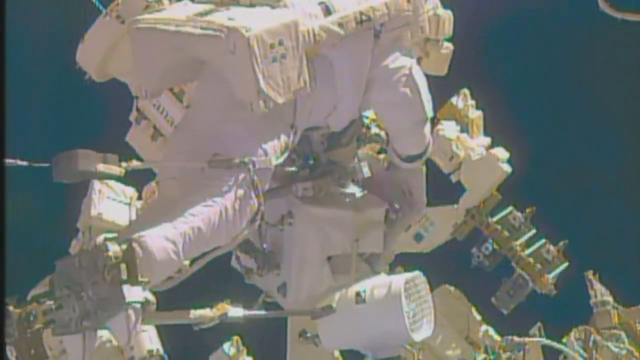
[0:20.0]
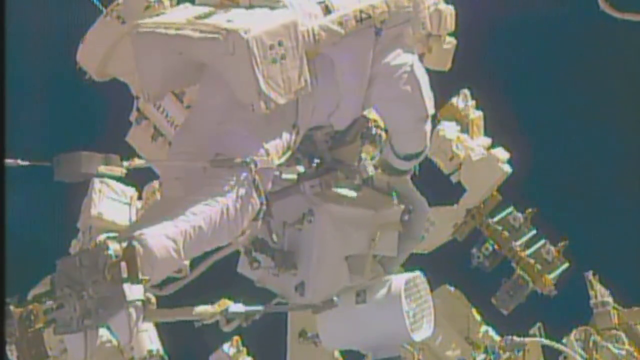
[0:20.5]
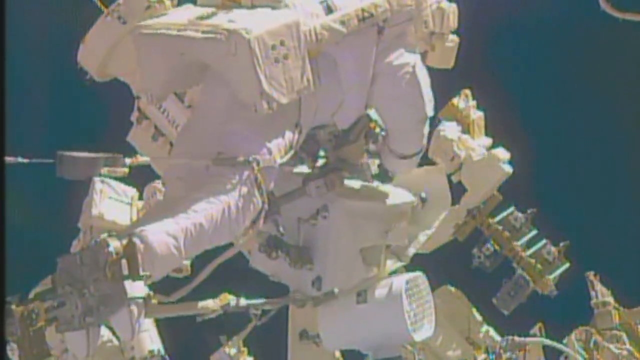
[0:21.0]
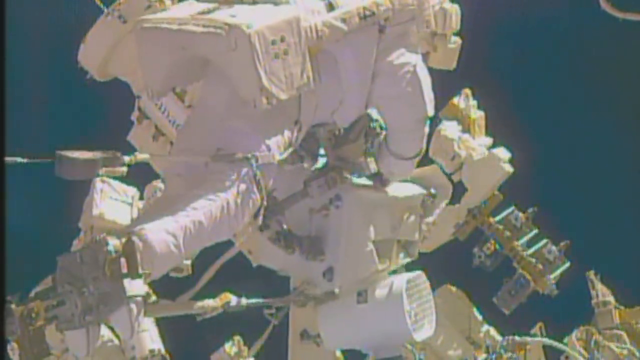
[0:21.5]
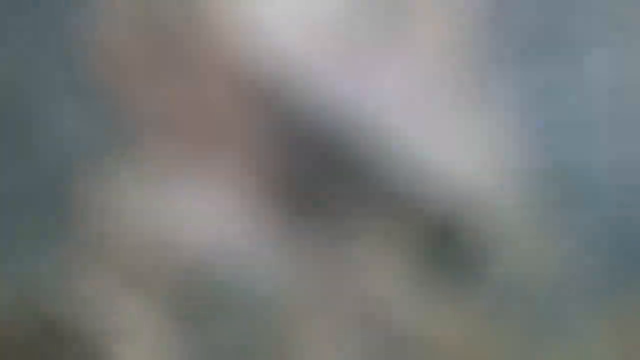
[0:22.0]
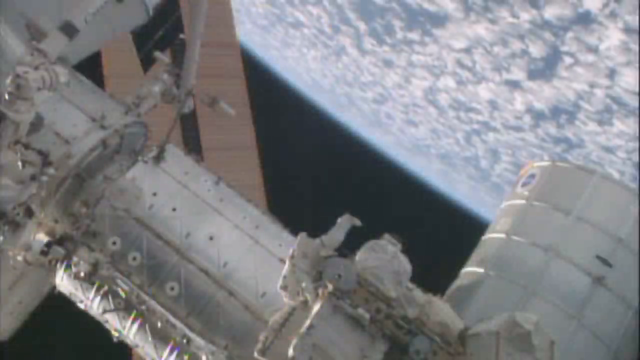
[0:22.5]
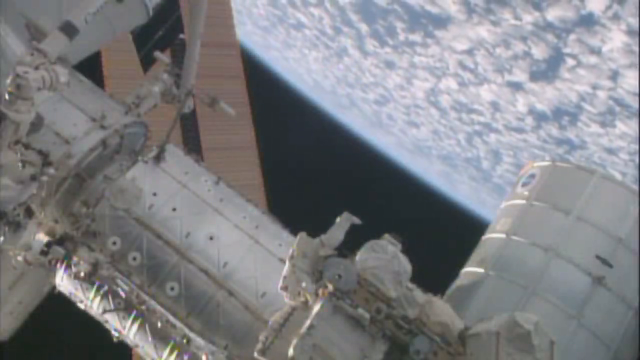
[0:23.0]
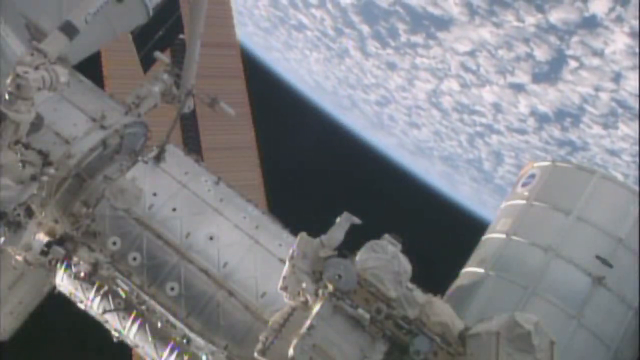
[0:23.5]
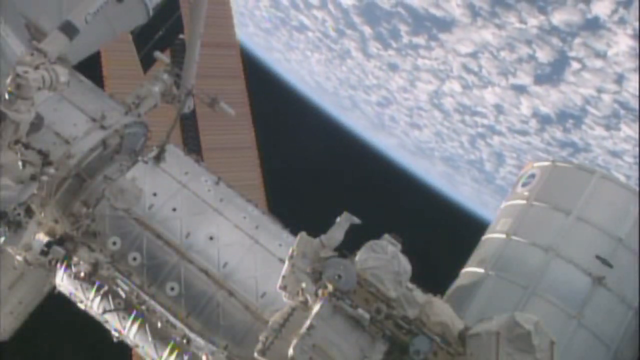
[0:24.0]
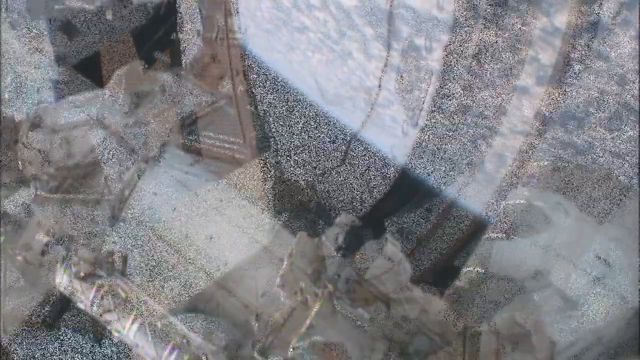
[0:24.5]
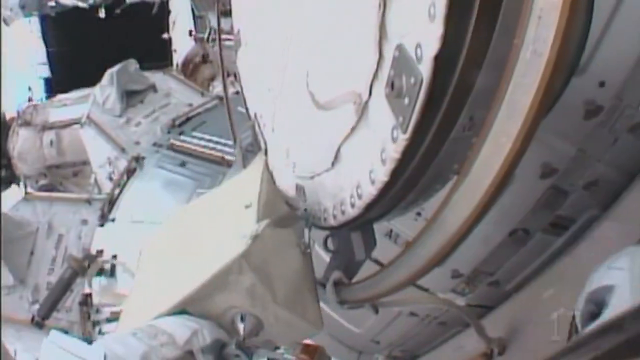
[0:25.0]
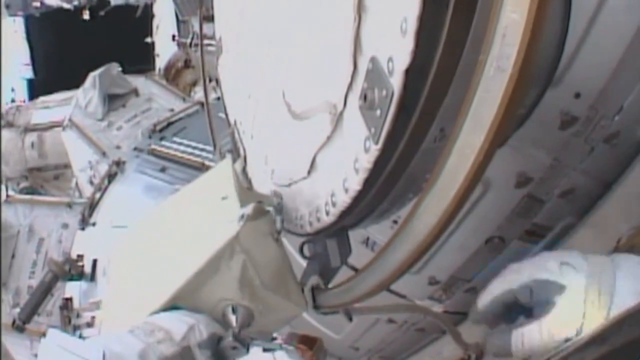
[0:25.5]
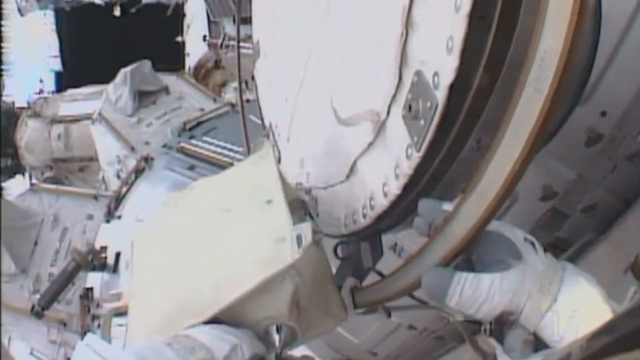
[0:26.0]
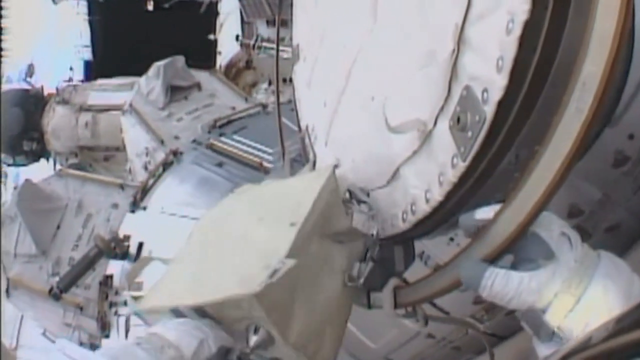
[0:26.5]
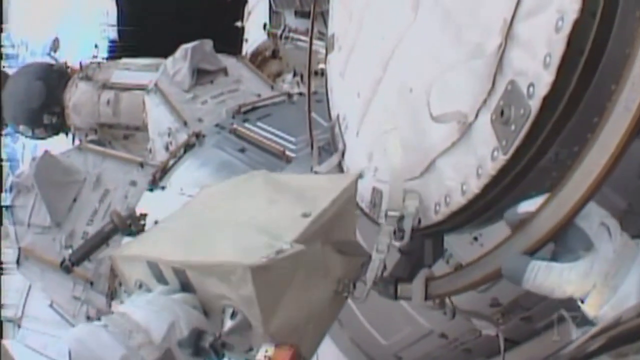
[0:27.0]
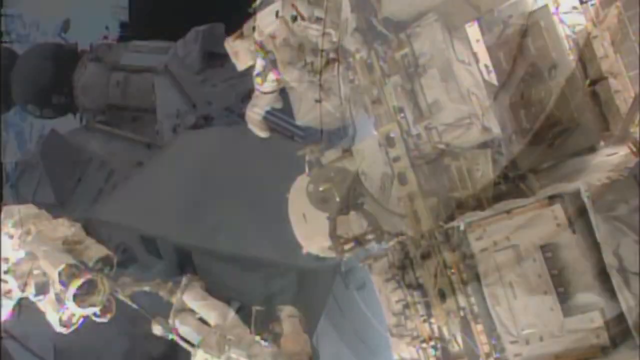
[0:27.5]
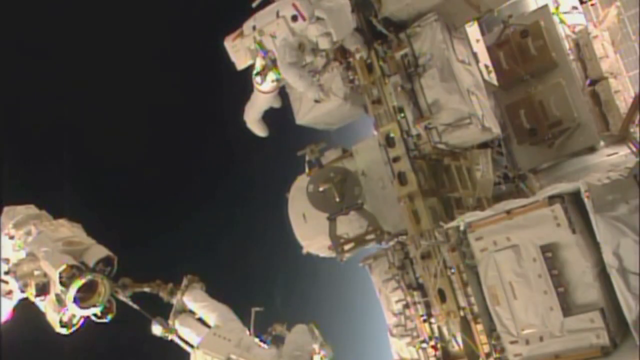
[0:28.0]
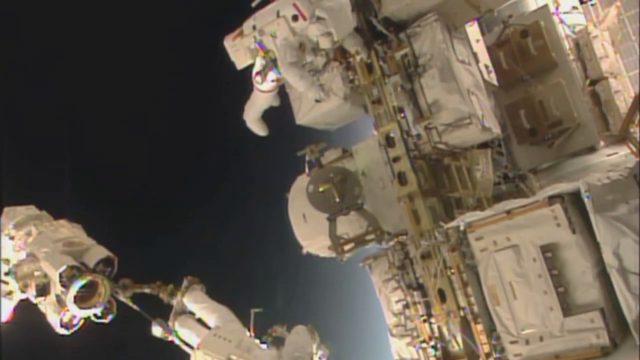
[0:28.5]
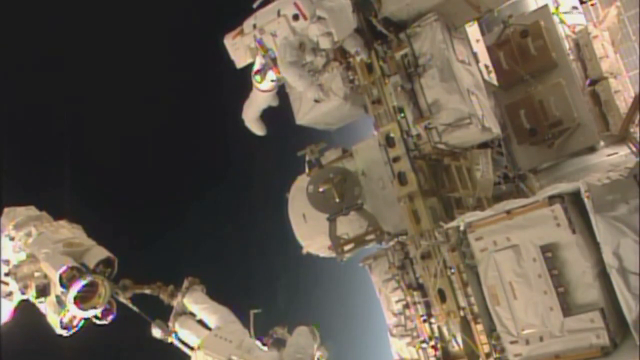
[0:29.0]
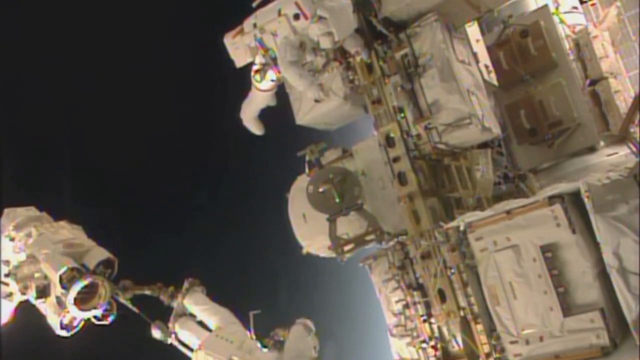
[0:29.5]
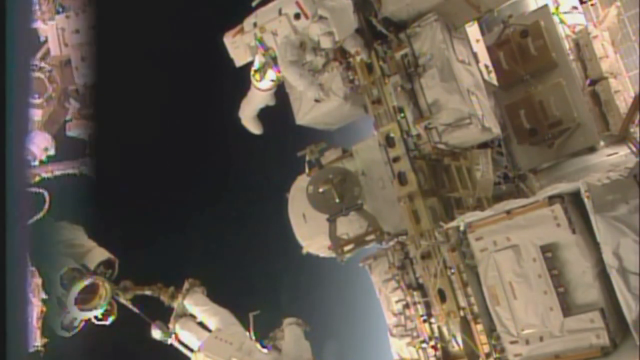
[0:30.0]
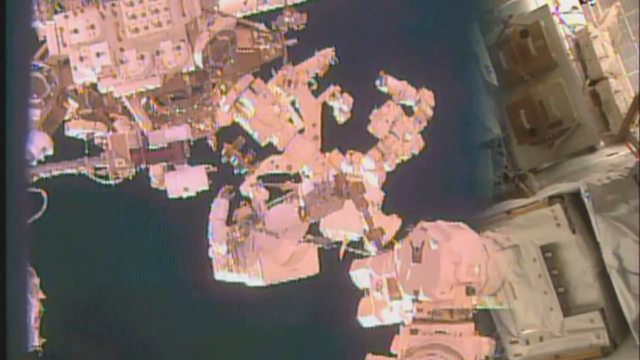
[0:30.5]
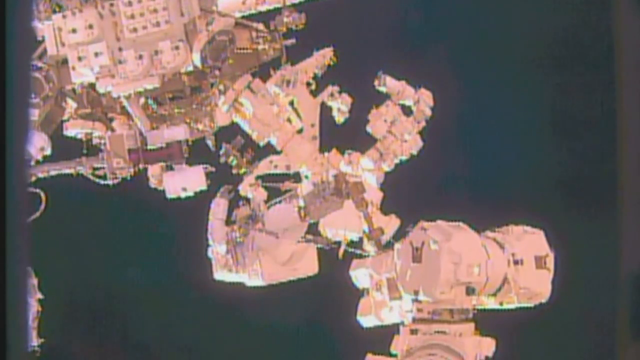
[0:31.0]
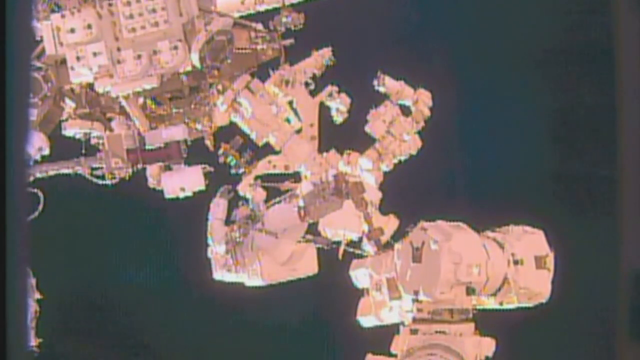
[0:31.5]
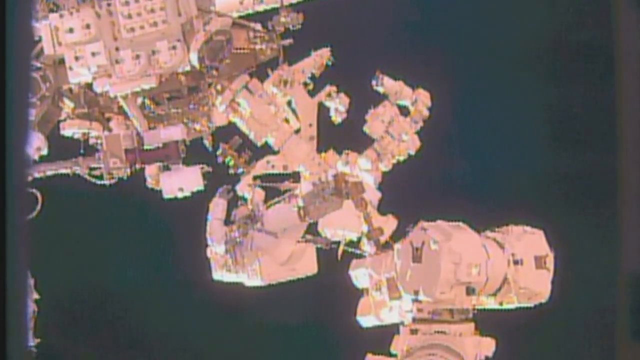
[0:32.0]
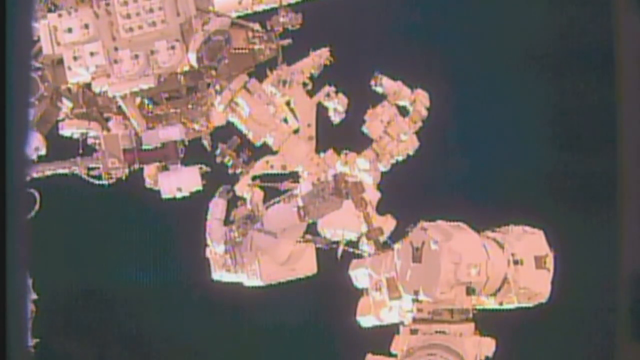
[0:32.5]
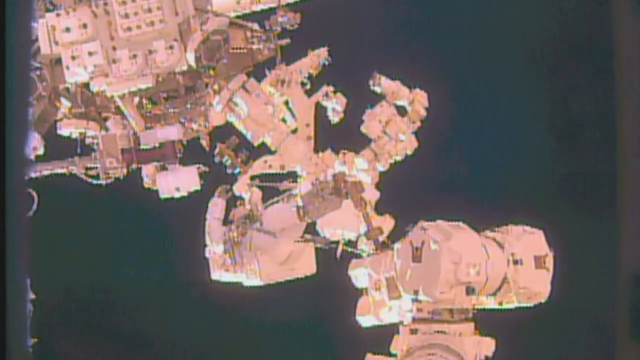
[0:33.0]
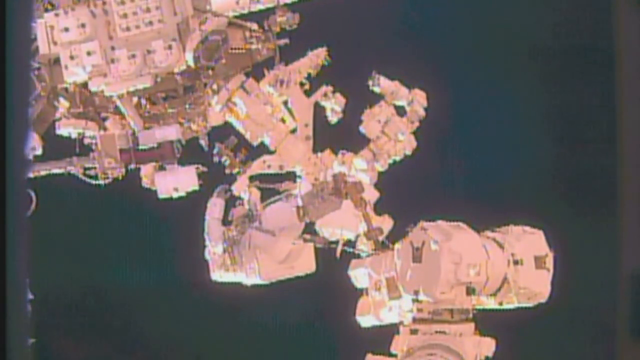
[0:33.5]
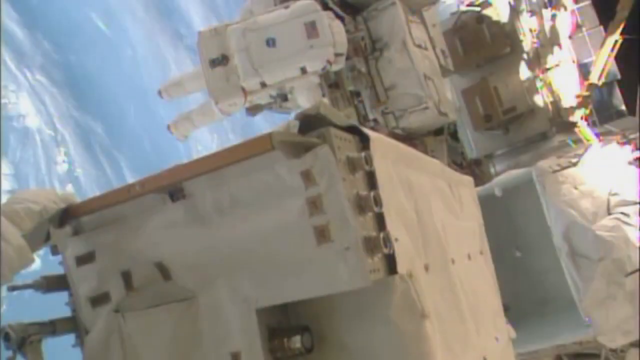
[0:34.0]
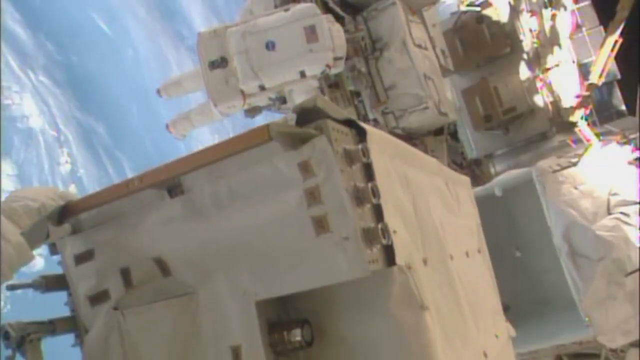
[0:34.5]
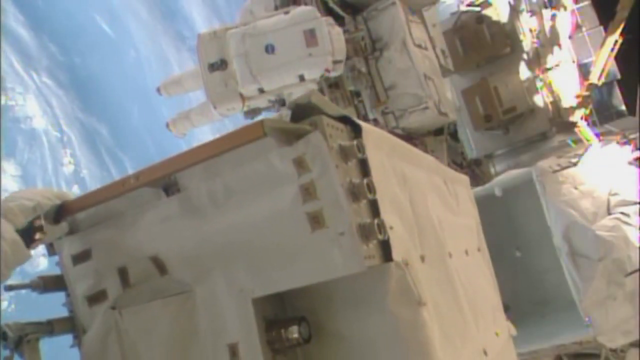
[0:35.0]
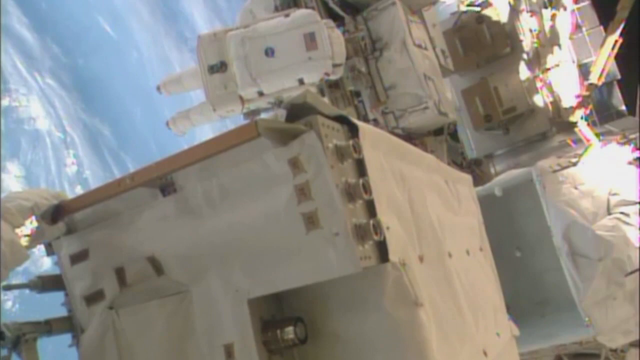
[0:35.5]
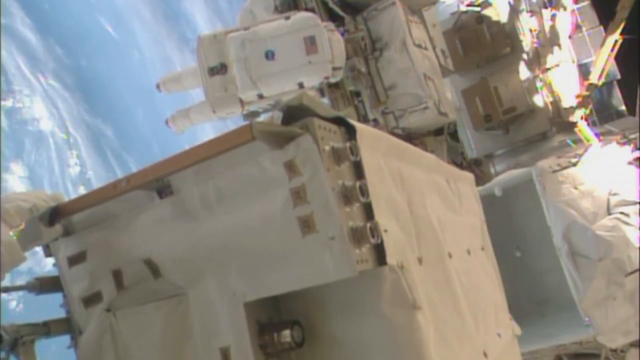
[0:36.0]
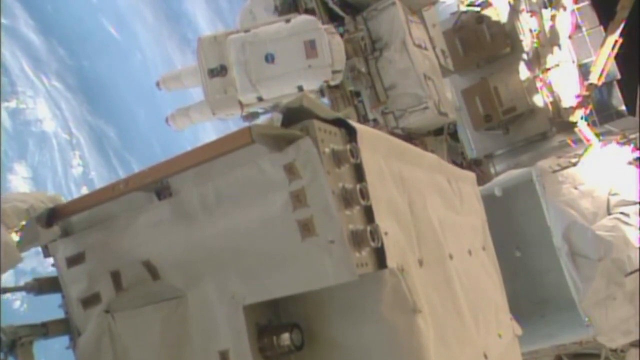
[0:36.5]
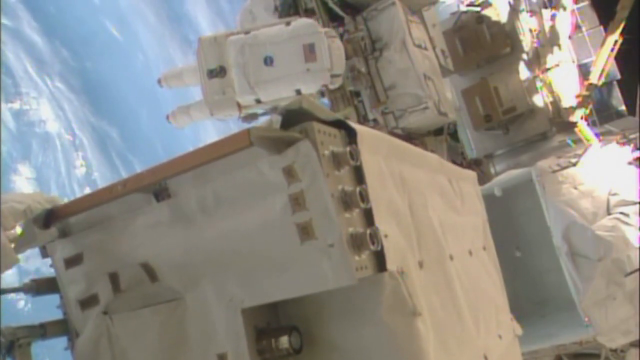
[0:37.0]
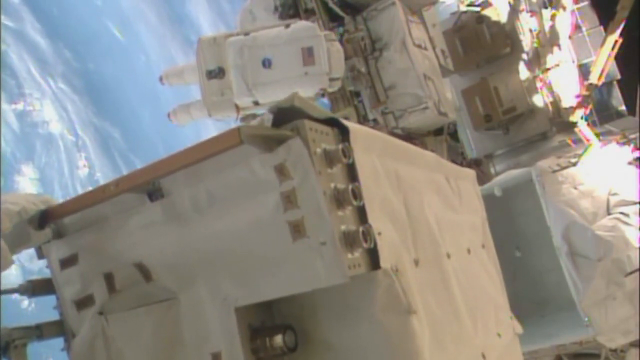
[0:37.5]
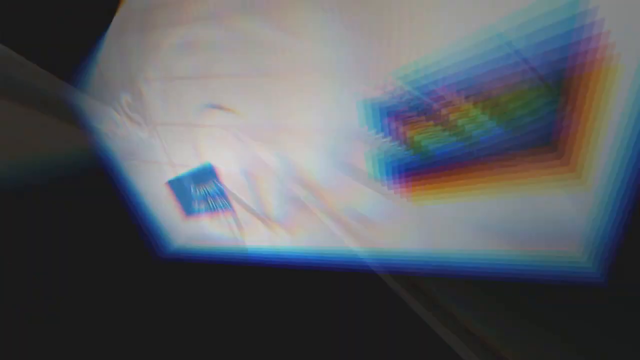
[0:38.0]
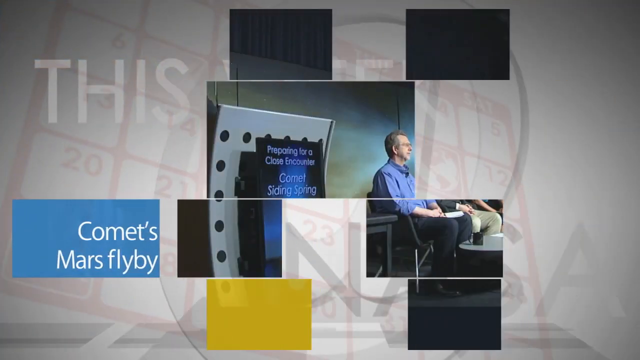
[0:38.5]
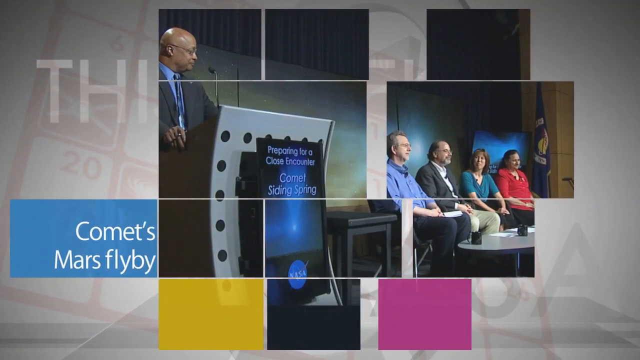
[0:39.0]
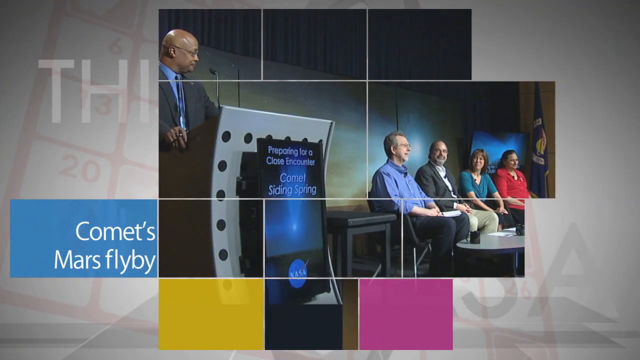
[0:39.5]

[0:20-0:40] What appears to be an astronaut works outside a space station in space, apparently opening something and moving something around. The view changes to show him farther away, with the Earth below in the distance and the space station he is working on. Different scenes follow of the astronauts working outside the station; they seem to be repairing or attaching something, opening some sort of container and attaching things to the station. Things float as they move them around, and the astronauts are attached and tethered to the station. Another scene shows people inside a room with a stage, some flags and a presenter table: a panel of four people sitting in chairs and somebody at a podium. The text "comets Mars fly by" appears in a blue box to the left of the panel.